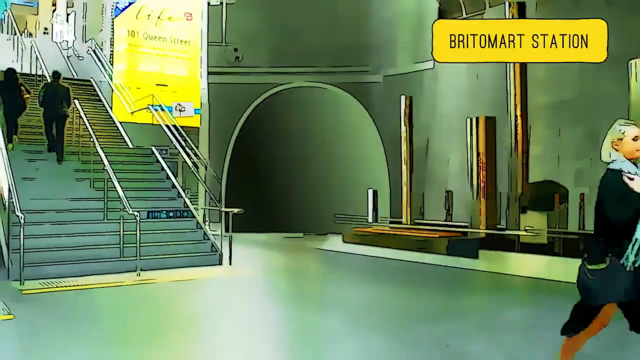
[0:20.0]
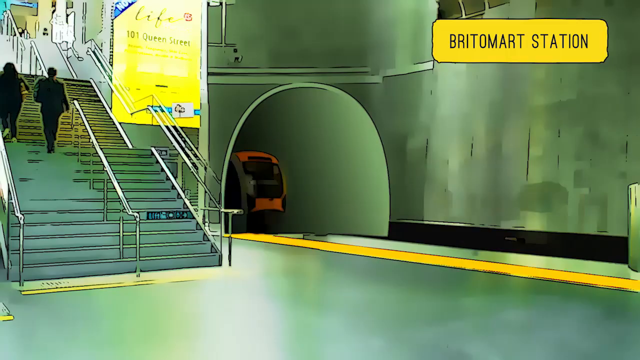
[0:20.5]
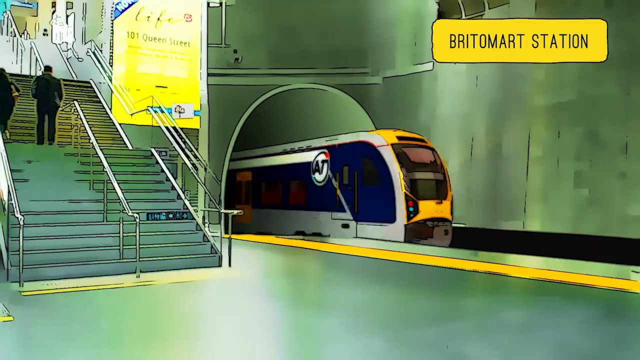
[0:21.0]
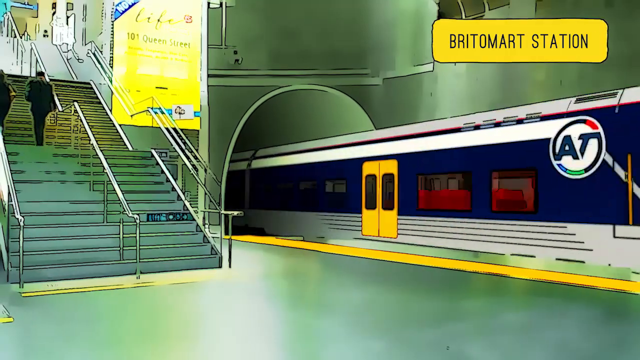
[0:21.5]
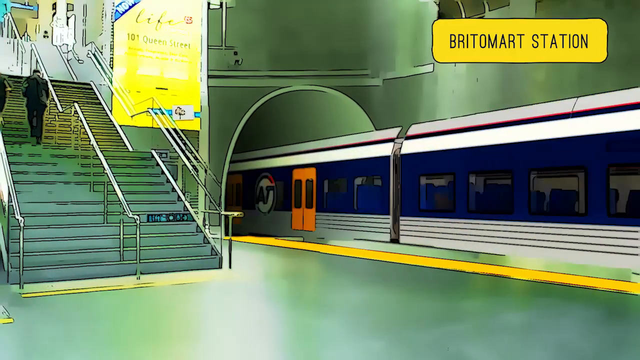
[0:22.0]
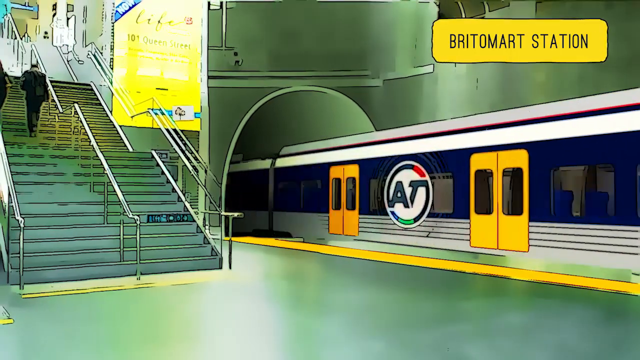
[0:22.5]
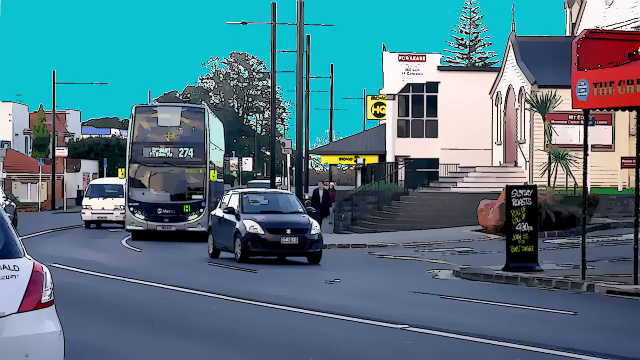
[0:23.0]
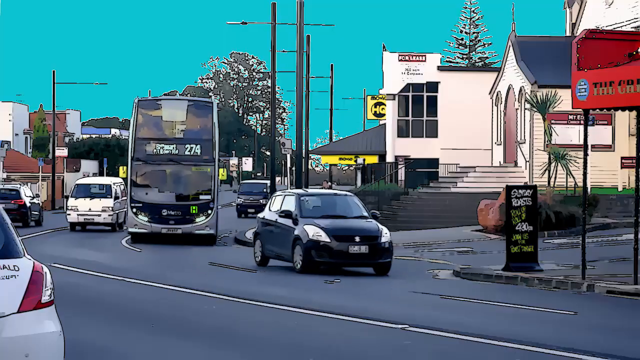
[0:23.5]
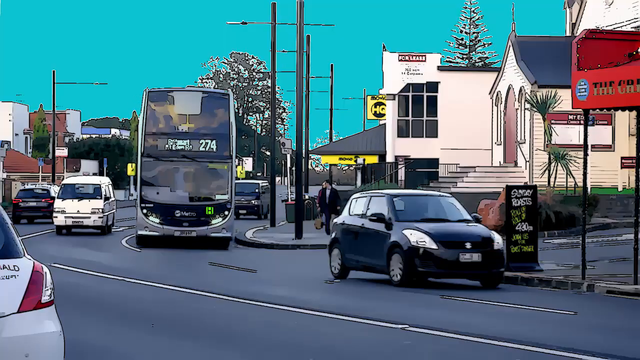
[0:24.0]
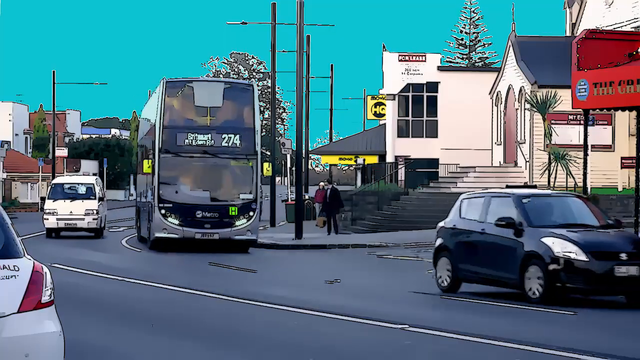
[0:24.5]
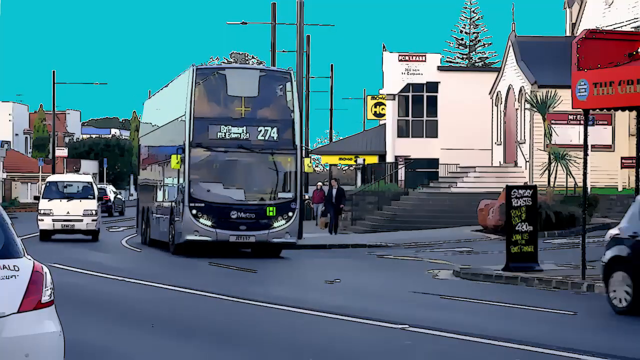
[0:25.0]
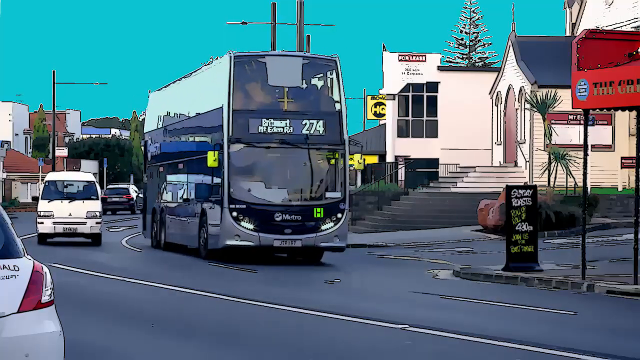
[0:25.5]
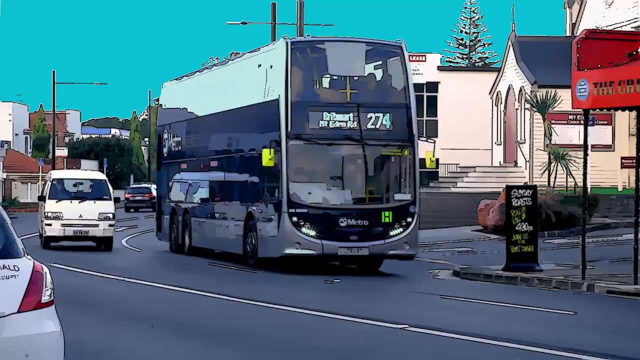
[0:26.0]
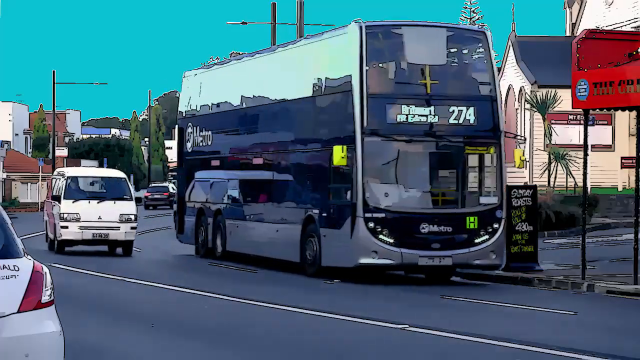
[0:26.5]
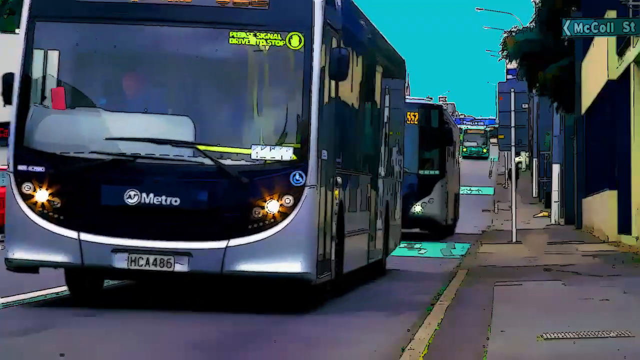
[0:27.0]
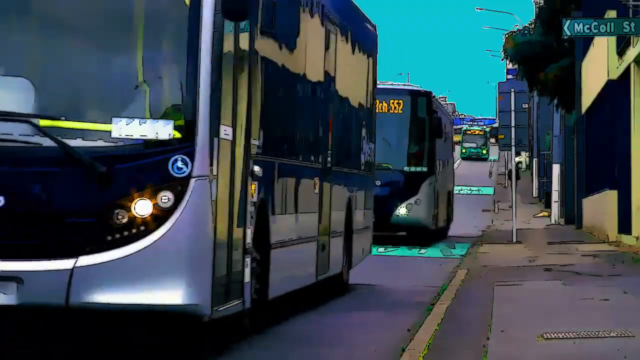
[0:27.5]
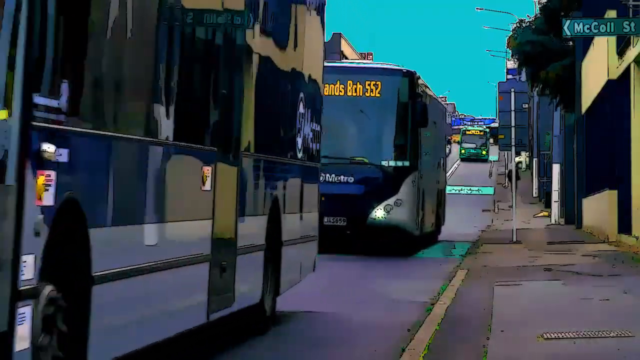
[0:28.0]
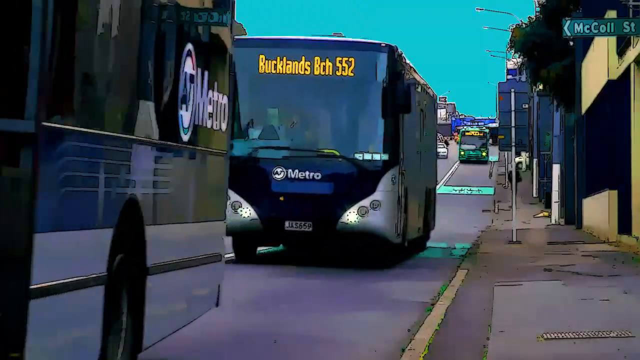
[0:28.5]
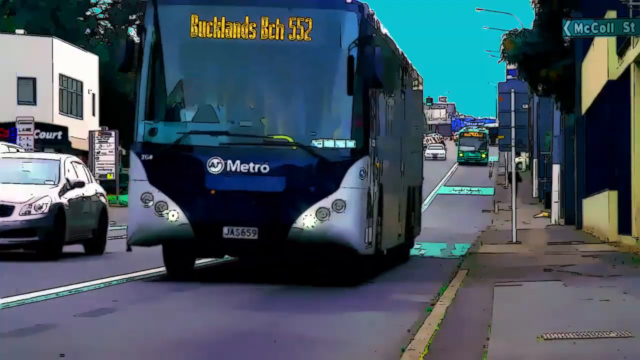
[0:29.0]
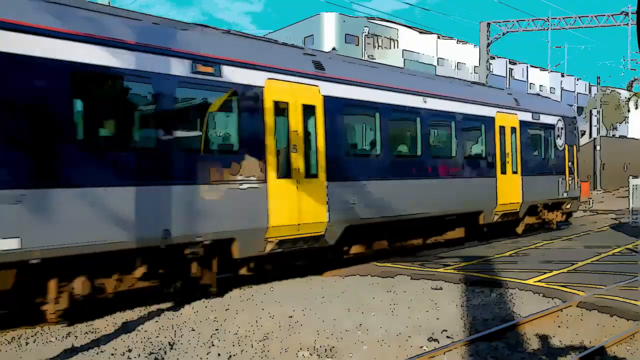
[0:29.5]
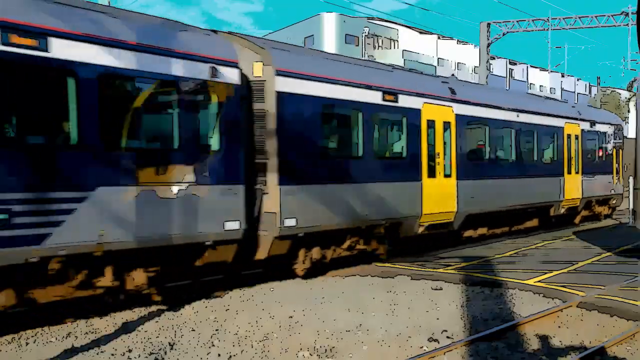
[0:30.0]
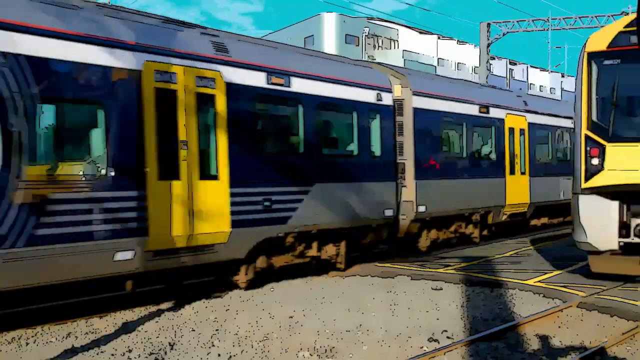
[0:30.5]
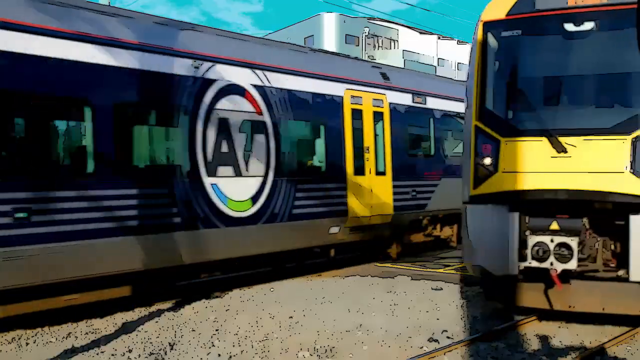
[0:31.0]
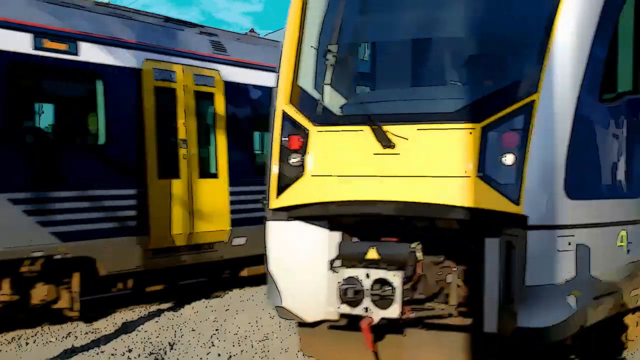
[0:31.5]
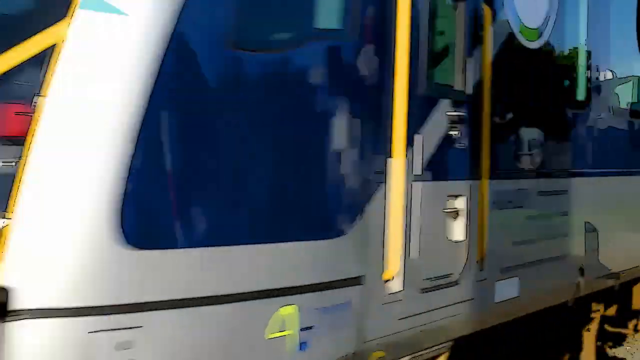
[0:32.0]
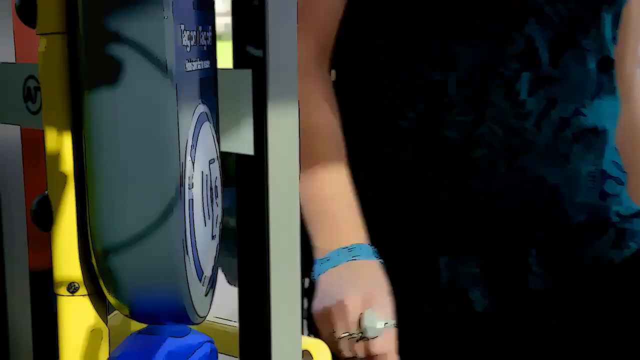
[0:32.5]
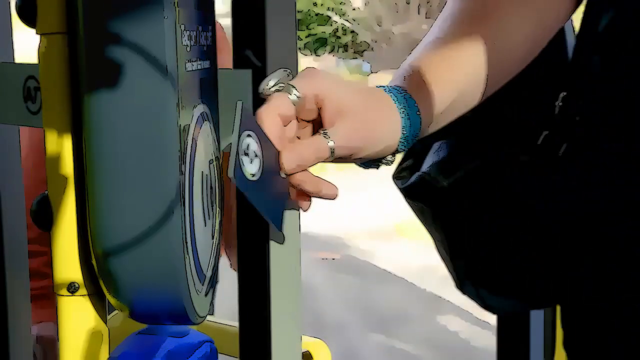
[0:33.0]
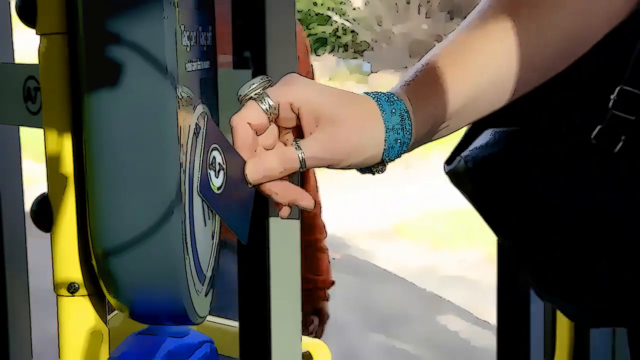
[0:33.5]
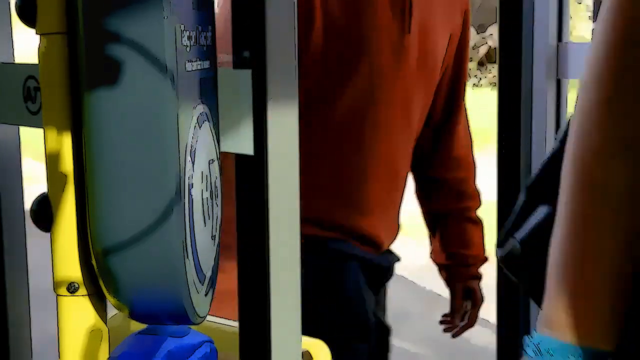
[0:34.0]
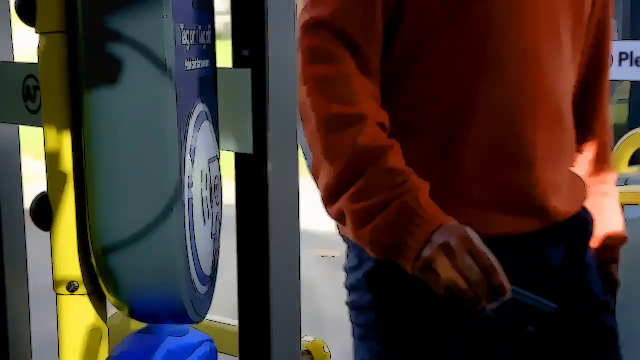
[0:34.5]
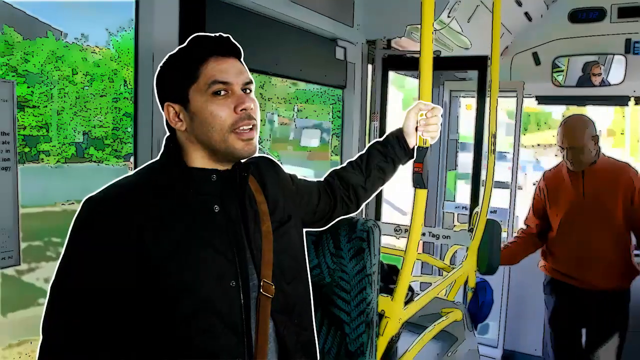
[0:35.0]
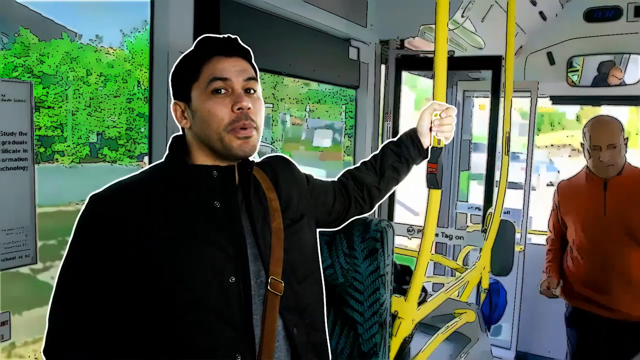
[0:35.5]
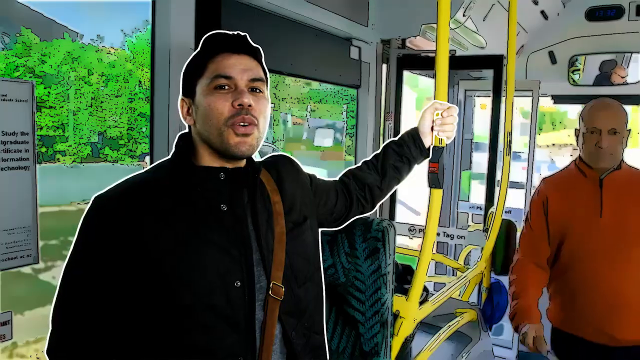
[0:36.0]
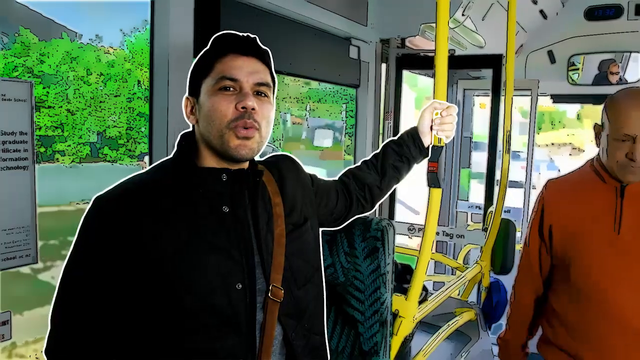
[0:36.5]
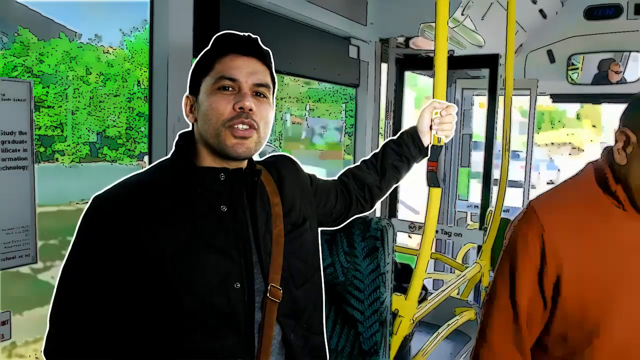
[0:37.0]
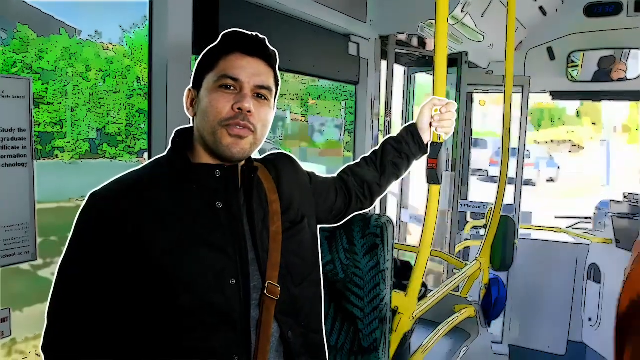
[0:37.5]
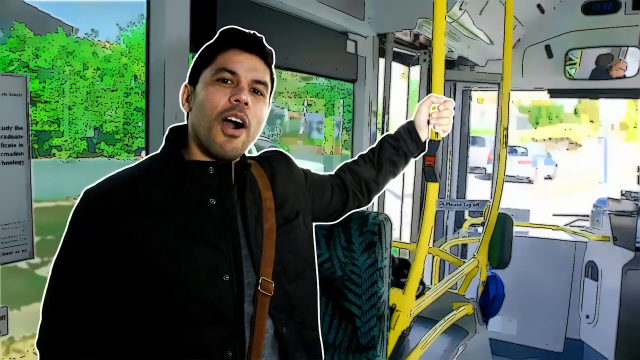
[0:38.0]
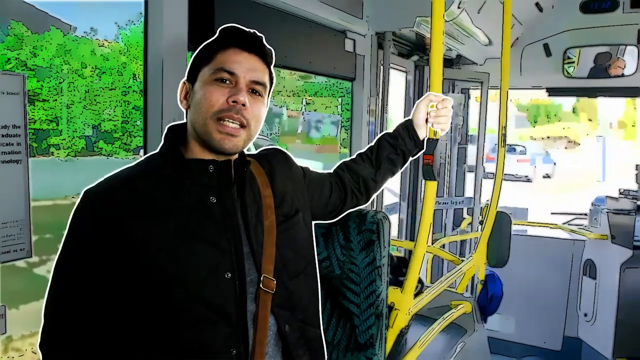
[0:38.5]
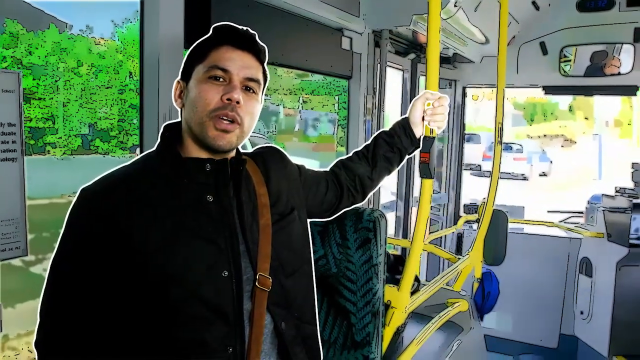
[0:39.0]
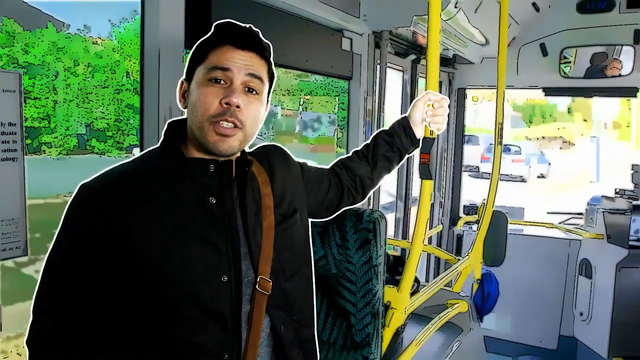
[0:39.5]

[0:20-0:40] At Britomart train station, a woman strides across the front. Some gold or bronze tubes by the far wall disappear through the floor as two people walk up the stairs, and a tunnel emerges in the centre of the screen with a train bearing the initials AT on the side. The train is yellow at the front, with a blue side that is white at the top and bottom, yellow doors and several carriages. The scene shifts to a busy road in a built-up area next to a church-like building and a retail outlet, with cars, vans and a bus on the far side of the road coming towards the camera. The scene changes again to two buses coming towards the camera, then a third bus; one says "Bucklands BCH 552" on the front, and they are Metro buses. Next, an overland train with the same yellow doors appears, another train approaches towards the camera, and the trains pass one another. Someone gets onto a bus or train with an AT card; they have silver rings on their fingers. A man does the same, scanning his card against the AT reader. This is a bus, the same one the man boarded at the beginning of the video, and the man in the white outline stands holding the bus's yellow handrail. He talks to the camera, holding the rail in his left hand, as the bus doors close and the bus sets off.